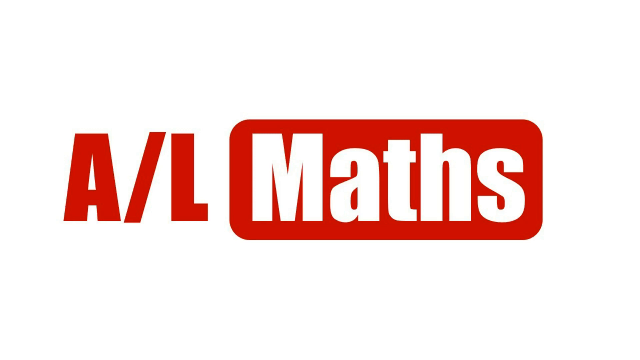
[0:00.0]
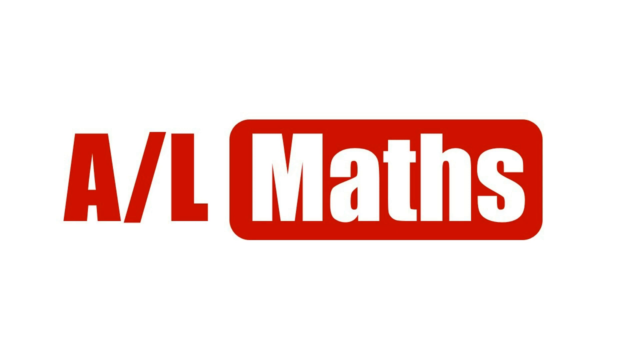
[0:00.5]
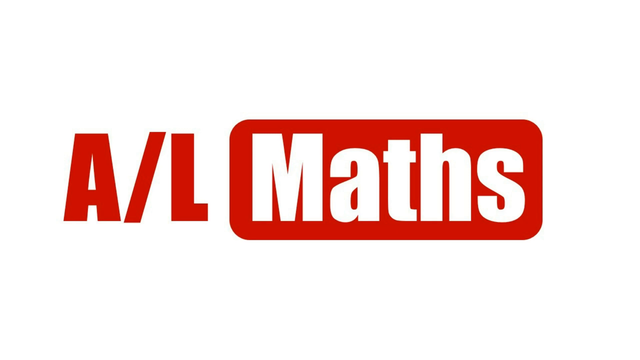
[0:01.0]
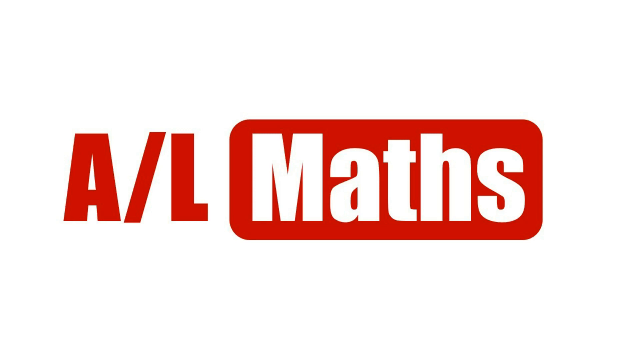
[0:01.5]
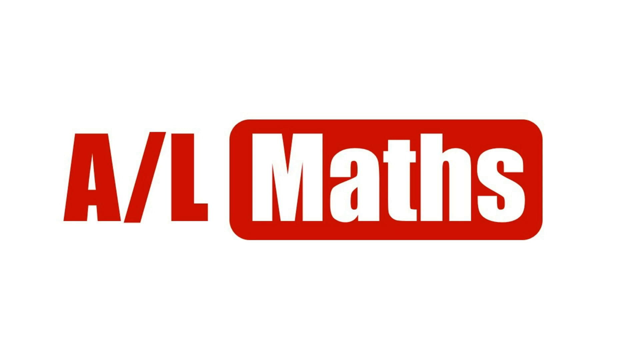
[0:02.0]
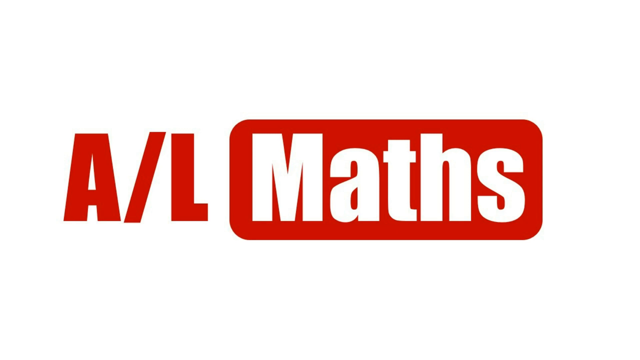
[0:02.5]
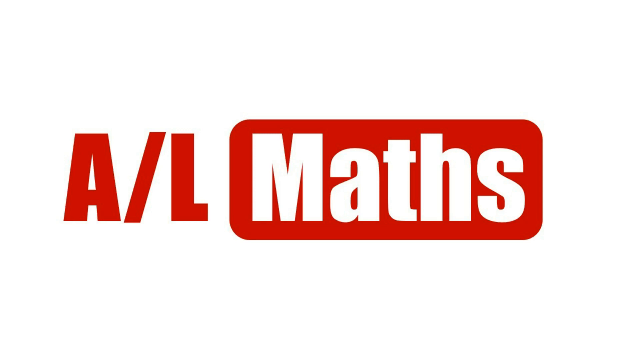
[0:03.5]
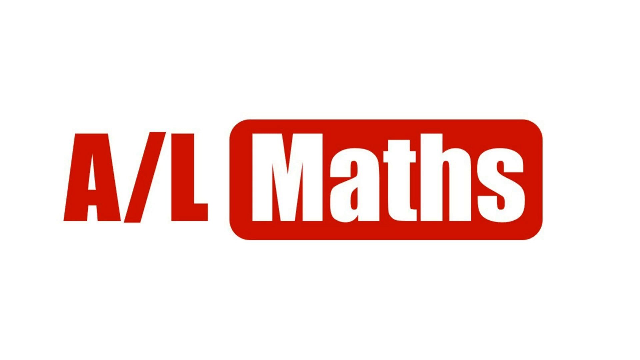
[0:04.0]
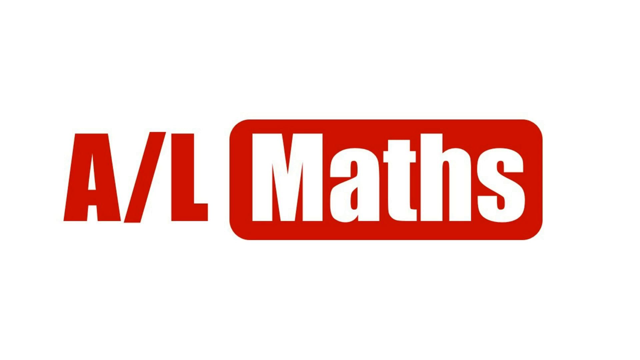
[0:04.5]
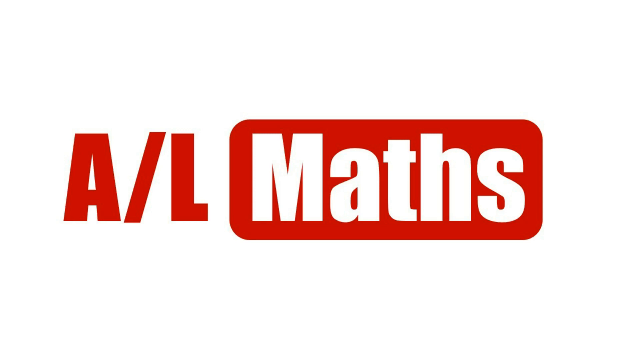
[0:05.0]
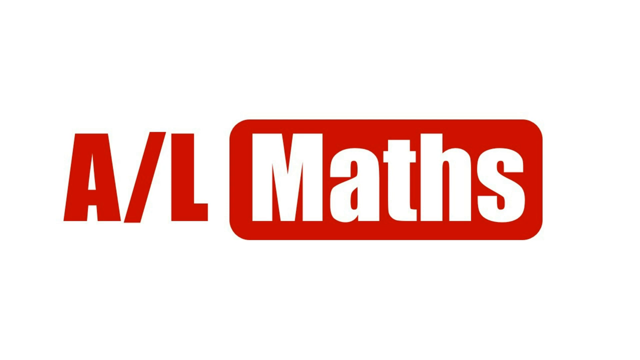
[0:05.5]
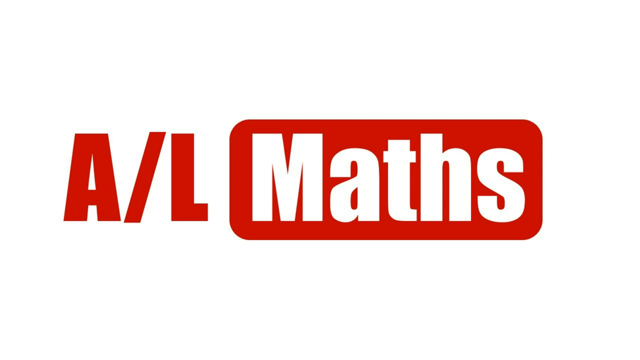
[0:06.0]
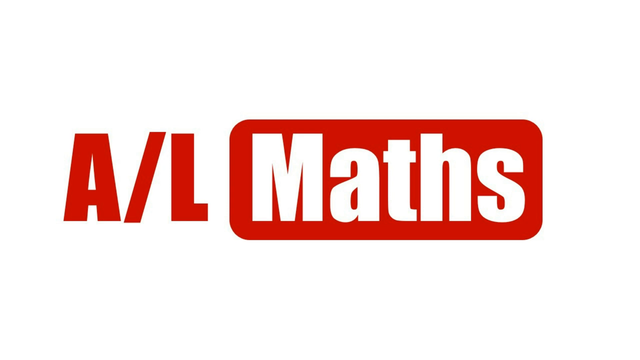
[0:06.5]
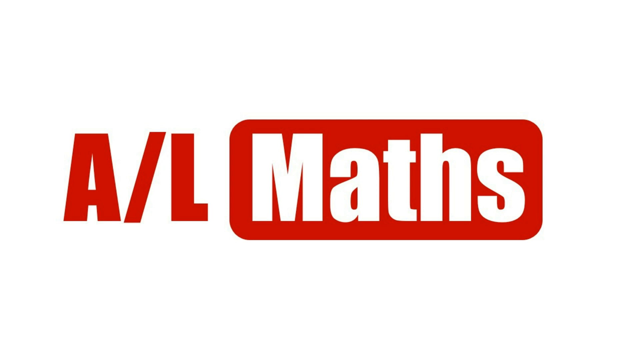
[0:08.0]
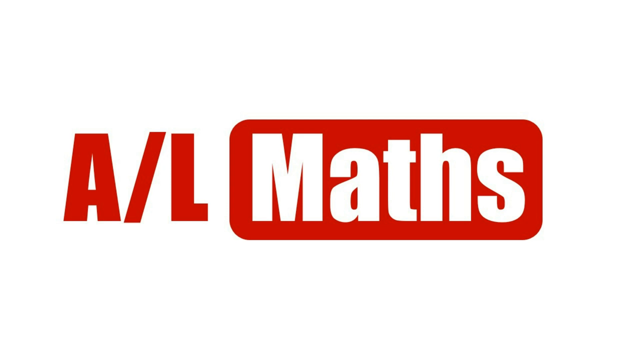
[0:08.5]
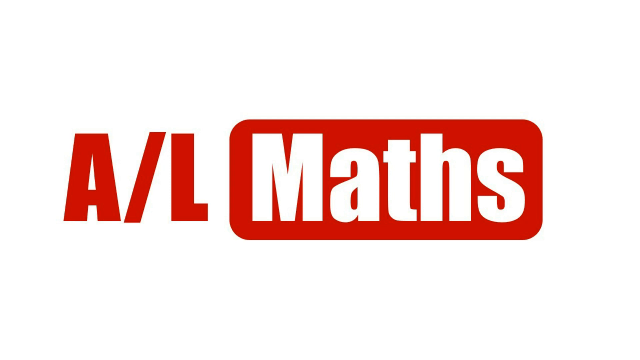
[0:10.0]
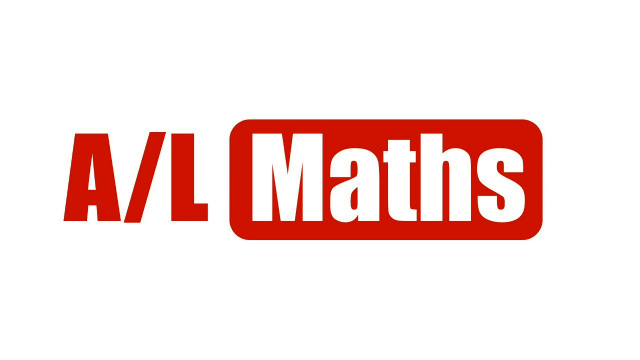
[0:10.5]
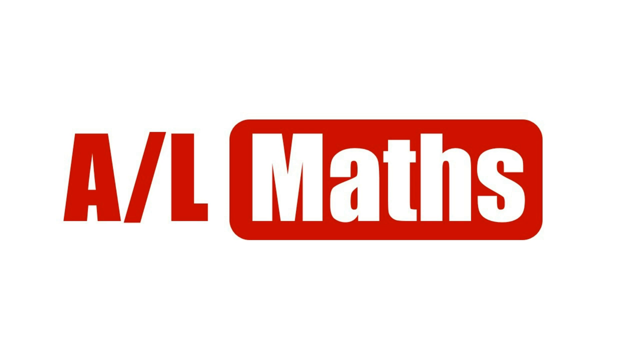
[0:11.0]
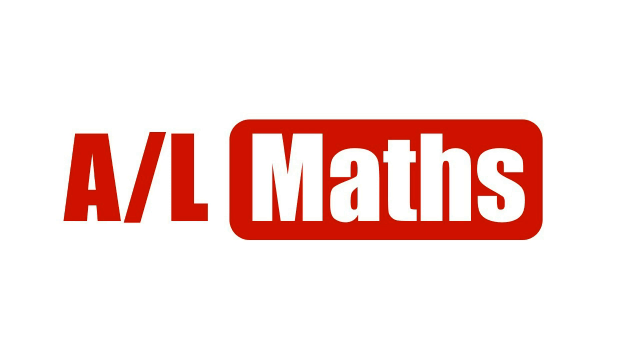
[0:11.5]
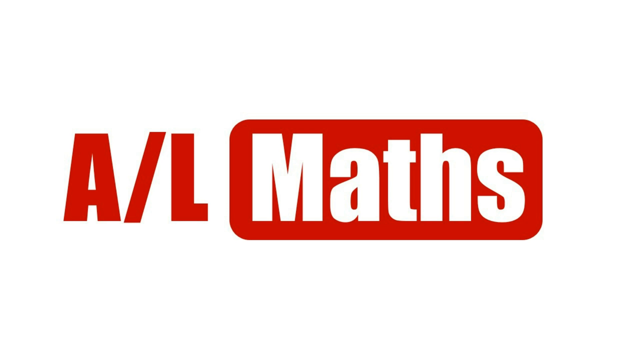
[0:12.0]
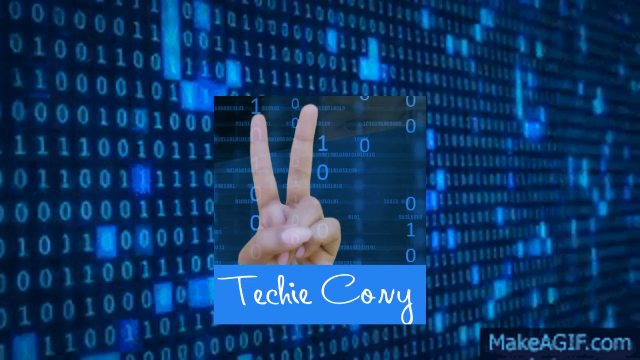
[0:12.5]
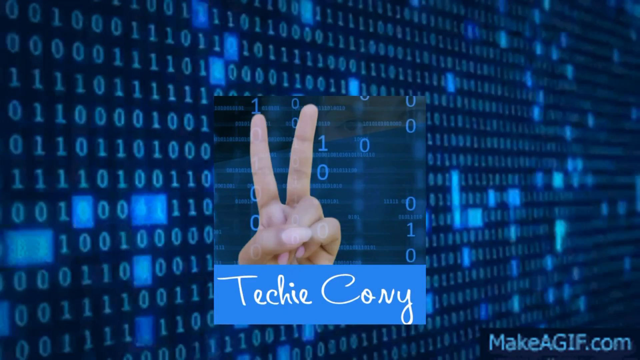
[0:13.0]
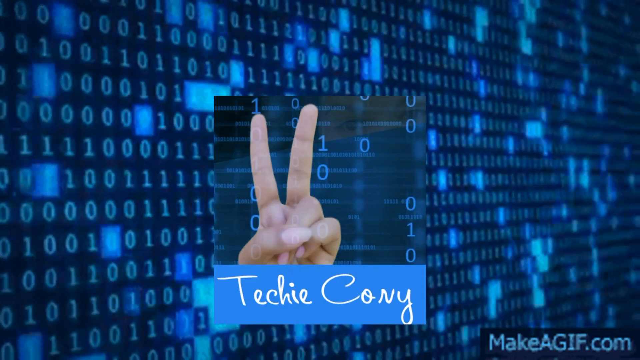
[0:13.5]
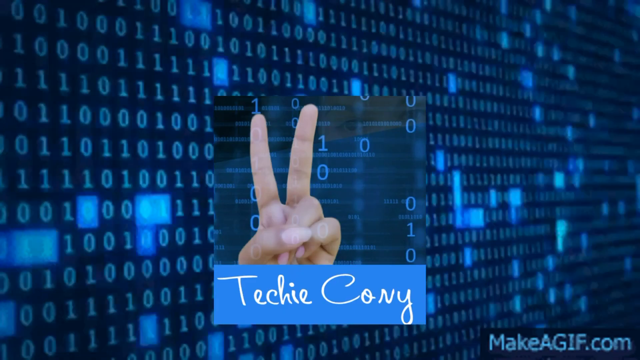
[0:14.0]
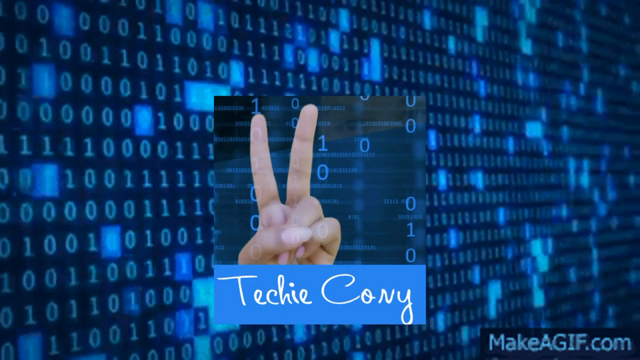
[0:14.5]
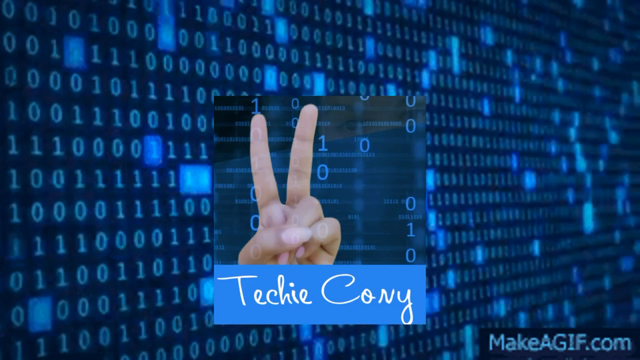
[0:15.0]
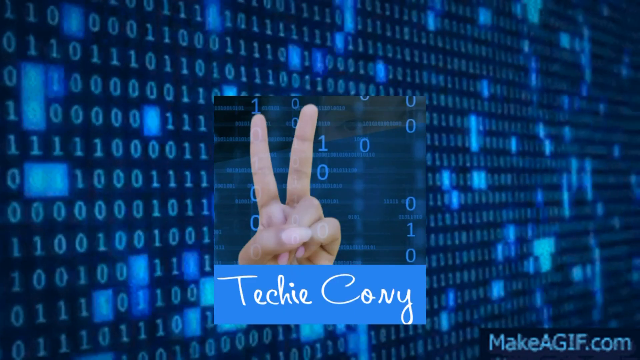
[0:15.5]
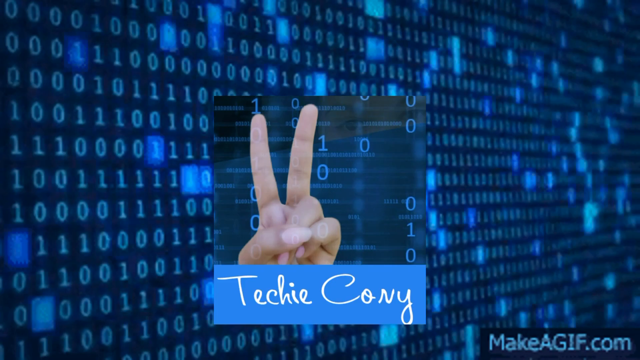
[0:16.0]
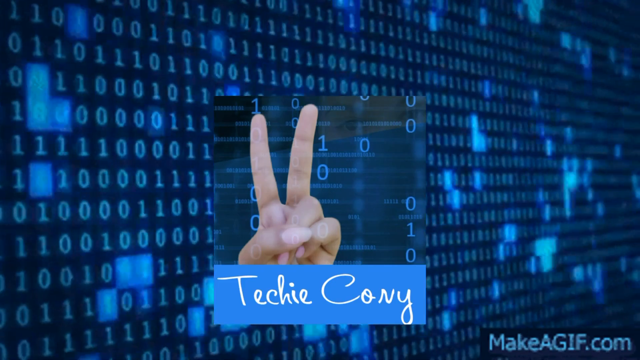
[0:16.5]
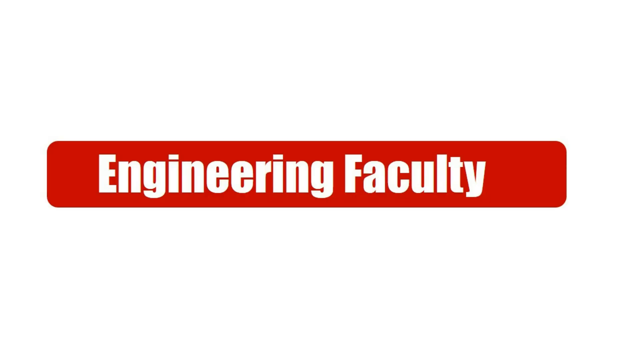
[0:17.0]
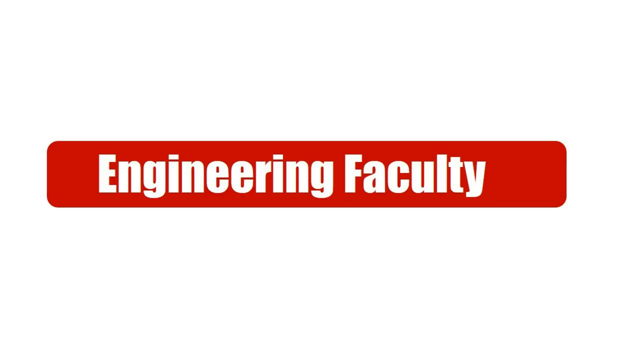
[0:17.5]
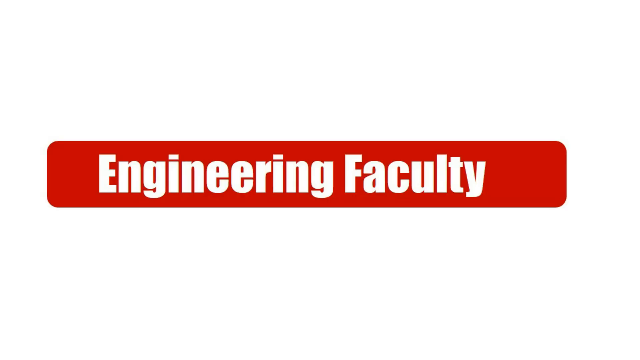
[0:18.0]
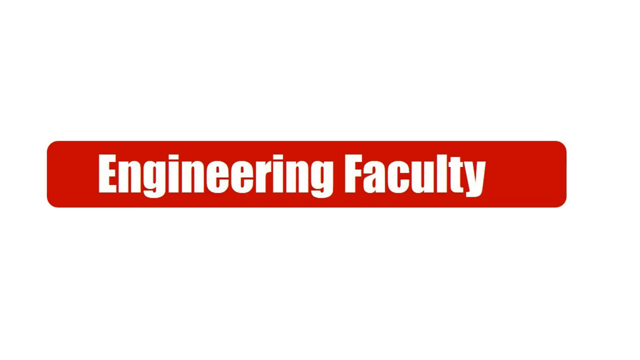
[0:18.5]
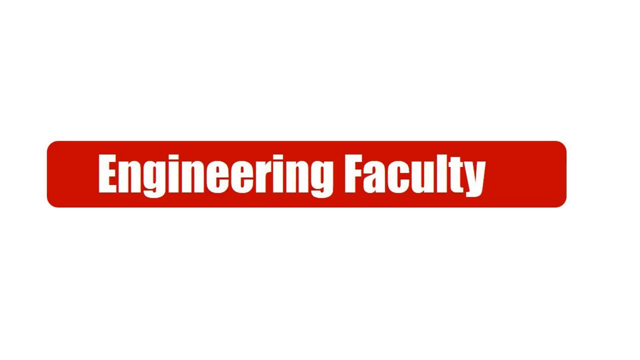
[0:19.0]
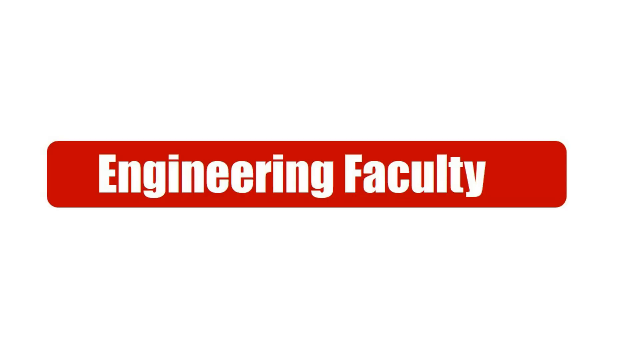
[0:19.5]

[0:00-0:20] A screen shows red writing that reads "A/L math," with "math" in white inside a red square. A hand makes a peace sign toward the viewer; only the fingers are visible. Underneath, text reads "techie Coney" in white lettering that is apparently a script, almost like handwriting, with a blue box around it. A bunch of binary numbers are behind it, and a little white box flashes in different parts of the screen behind; the background is angled and scrolls from right to left. Then "engineering faculty" appears in the same white with a red box. The video starts off with a white screen with fairly large text; the red and white reverse-print texts are the same size, and the red boxes around "math" and "engineering faculty" have rounded-off corners.